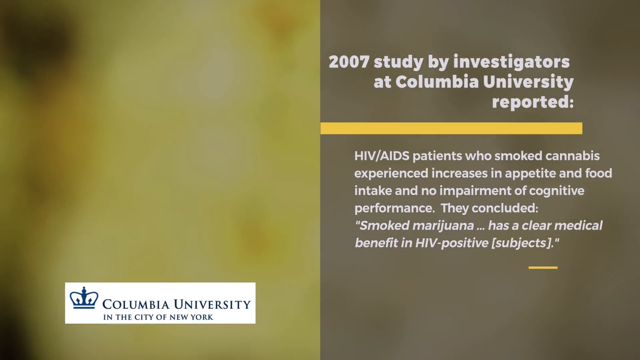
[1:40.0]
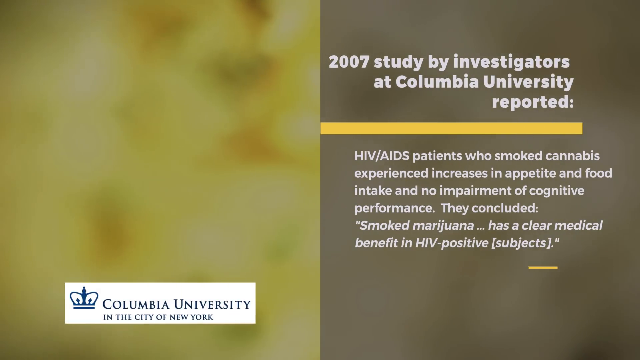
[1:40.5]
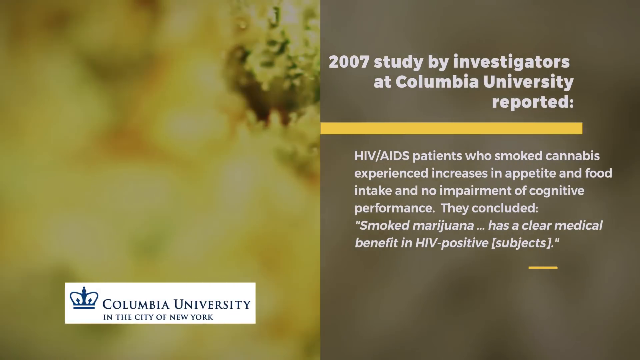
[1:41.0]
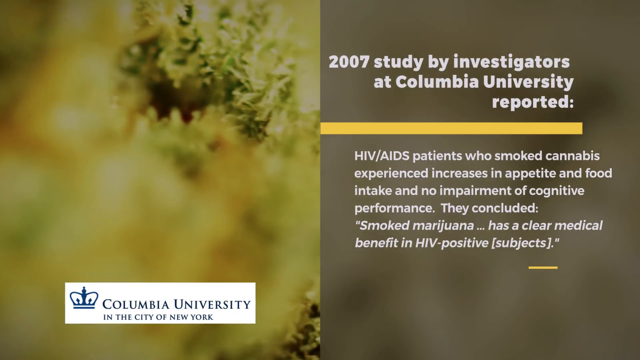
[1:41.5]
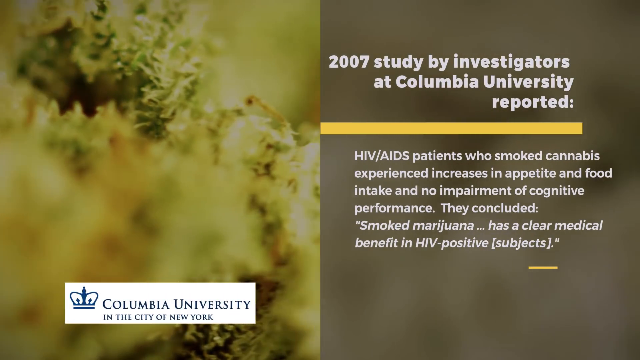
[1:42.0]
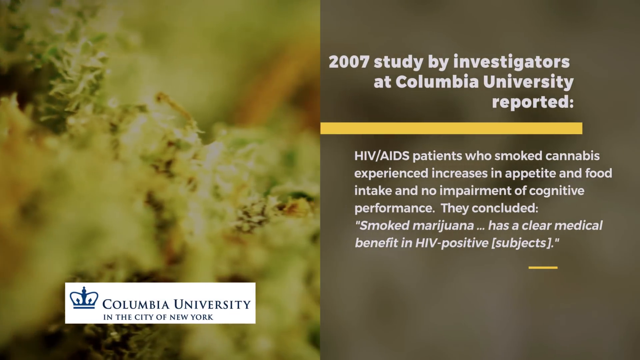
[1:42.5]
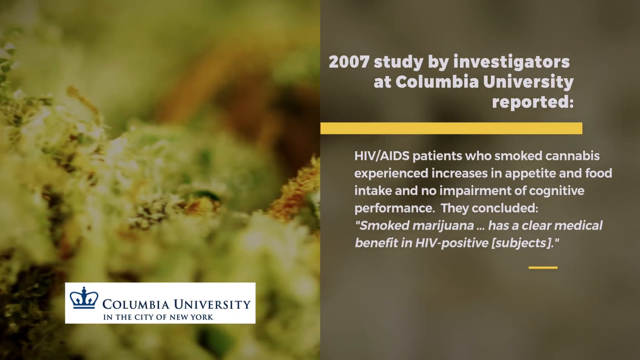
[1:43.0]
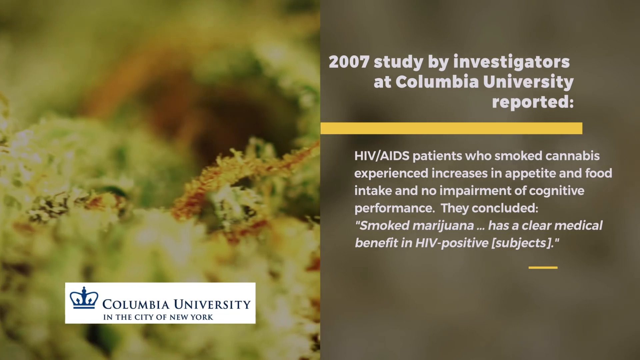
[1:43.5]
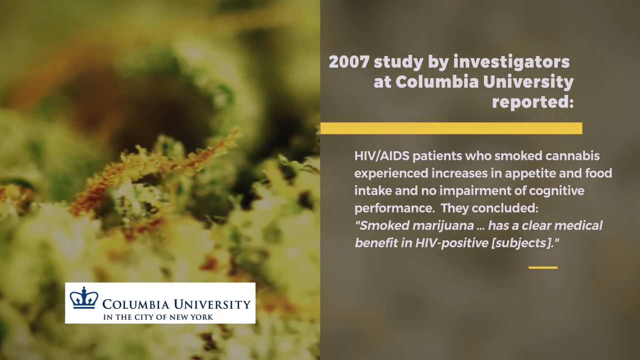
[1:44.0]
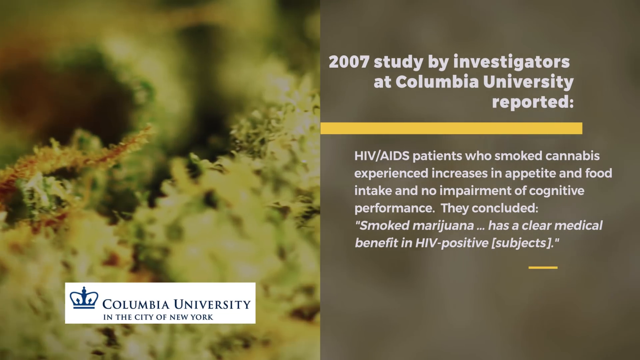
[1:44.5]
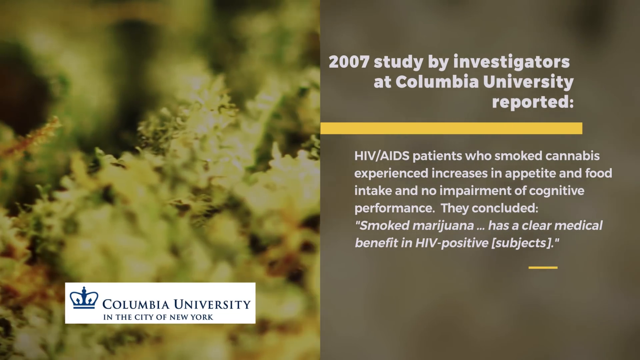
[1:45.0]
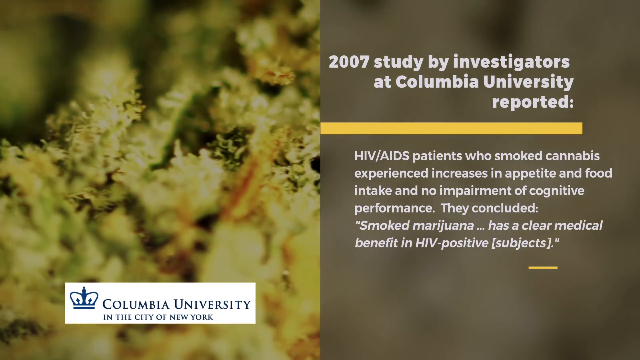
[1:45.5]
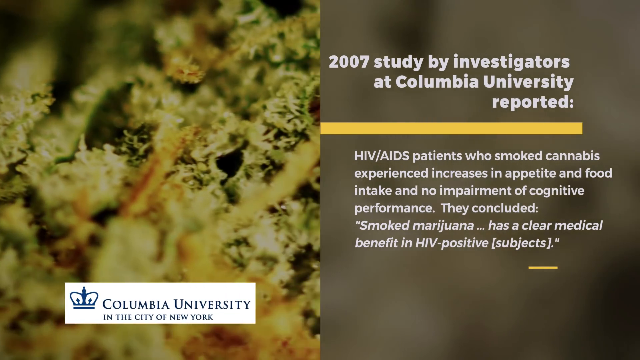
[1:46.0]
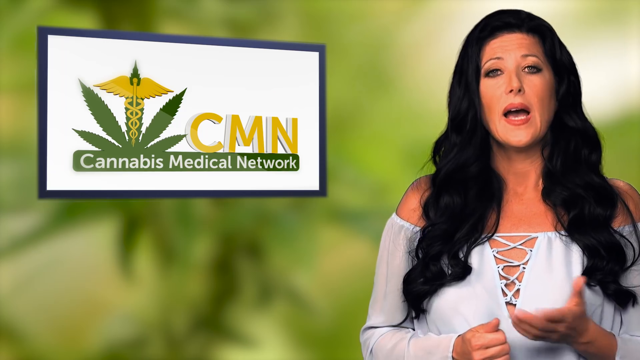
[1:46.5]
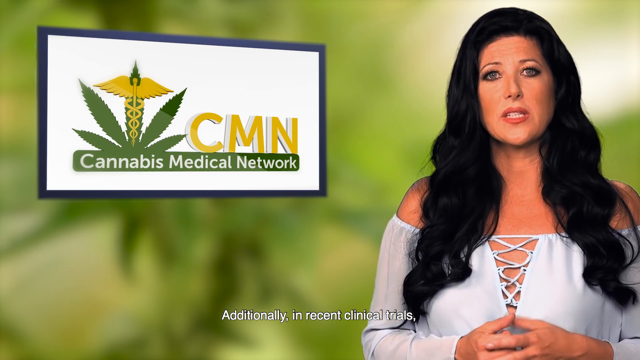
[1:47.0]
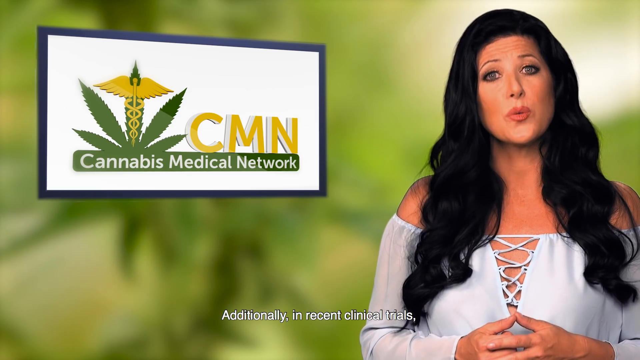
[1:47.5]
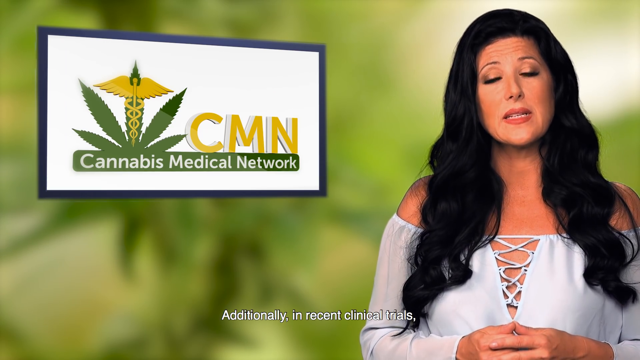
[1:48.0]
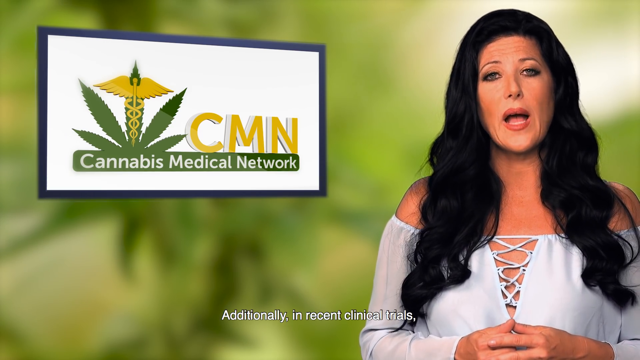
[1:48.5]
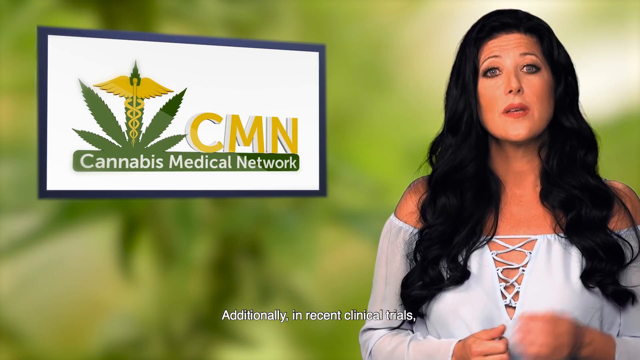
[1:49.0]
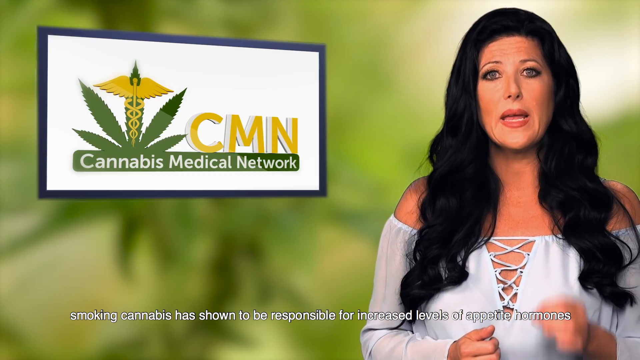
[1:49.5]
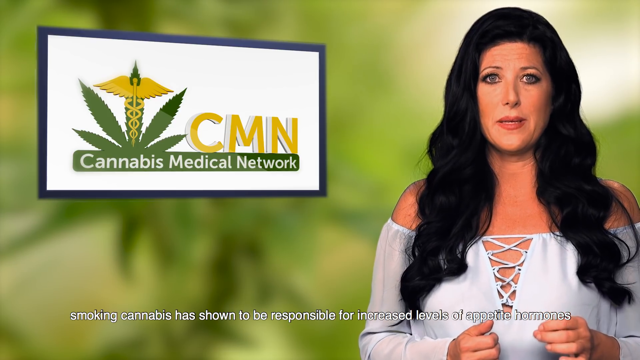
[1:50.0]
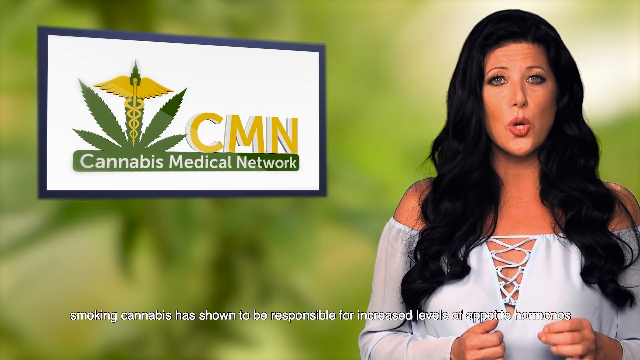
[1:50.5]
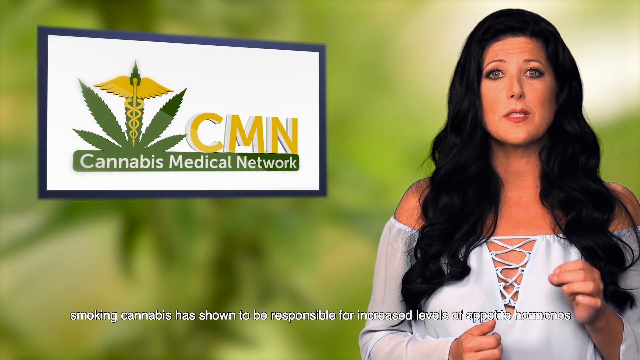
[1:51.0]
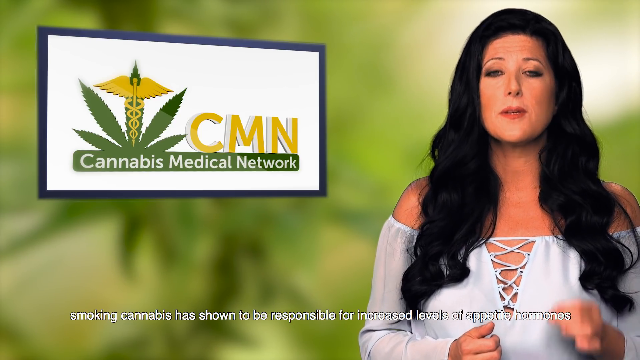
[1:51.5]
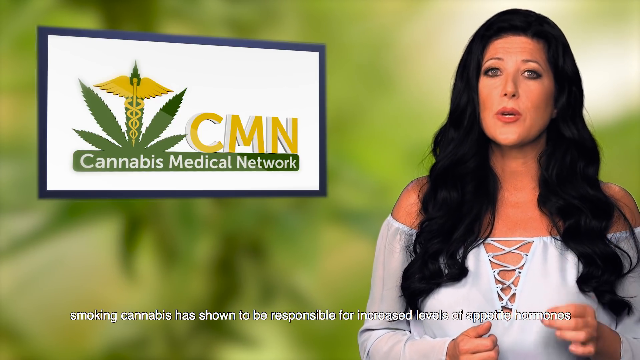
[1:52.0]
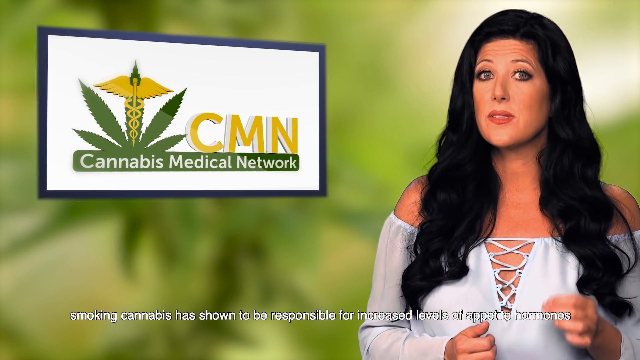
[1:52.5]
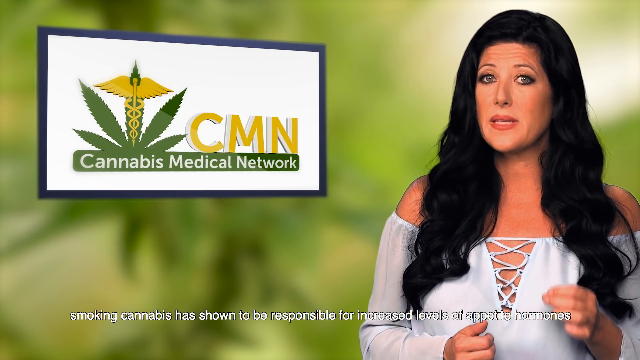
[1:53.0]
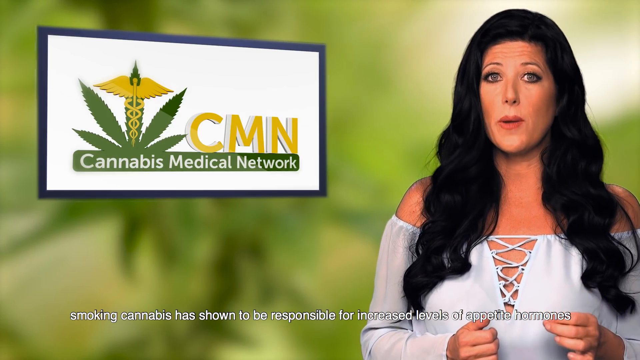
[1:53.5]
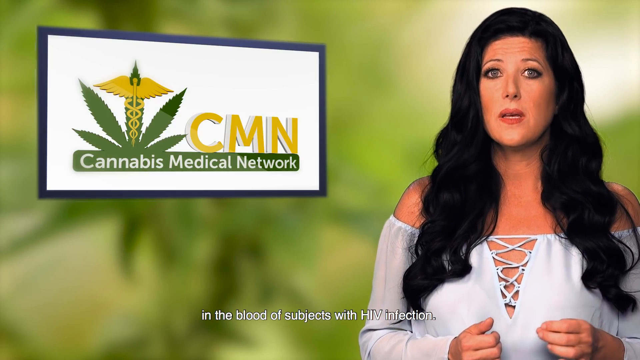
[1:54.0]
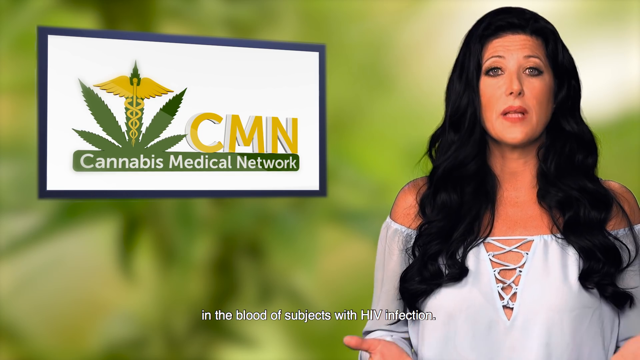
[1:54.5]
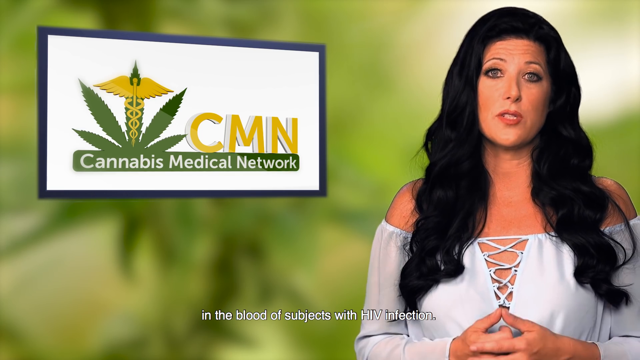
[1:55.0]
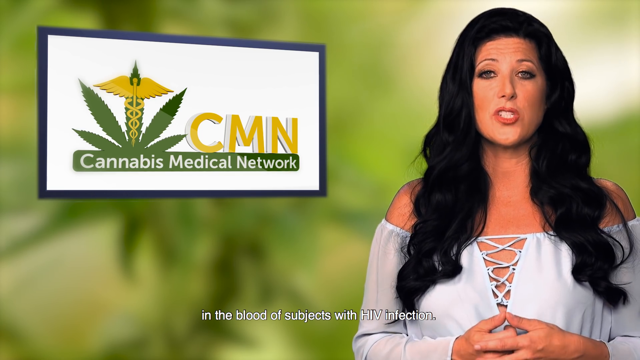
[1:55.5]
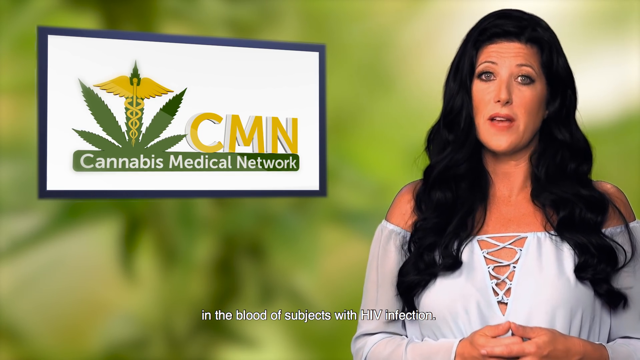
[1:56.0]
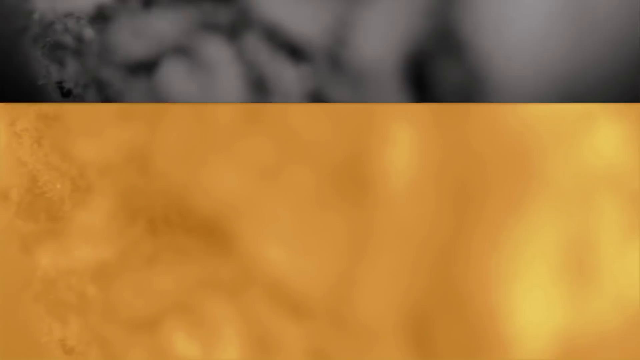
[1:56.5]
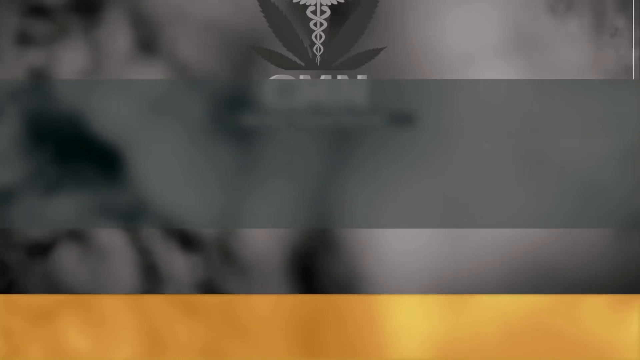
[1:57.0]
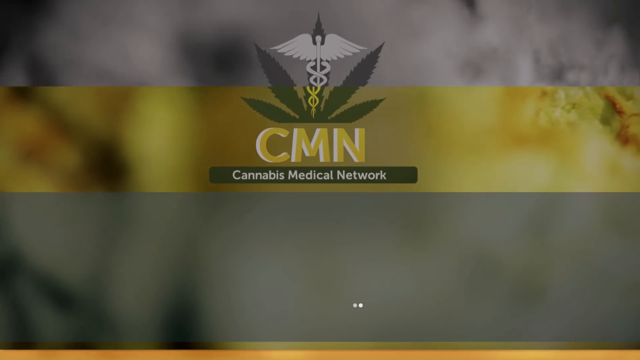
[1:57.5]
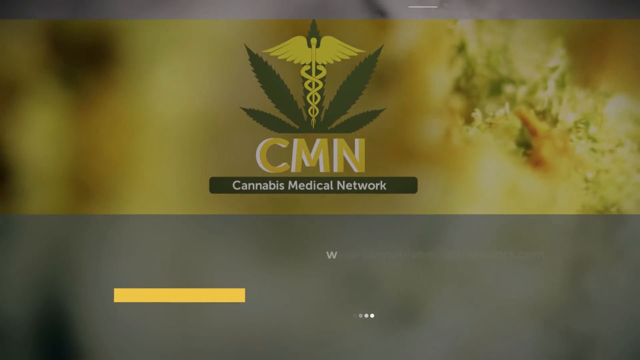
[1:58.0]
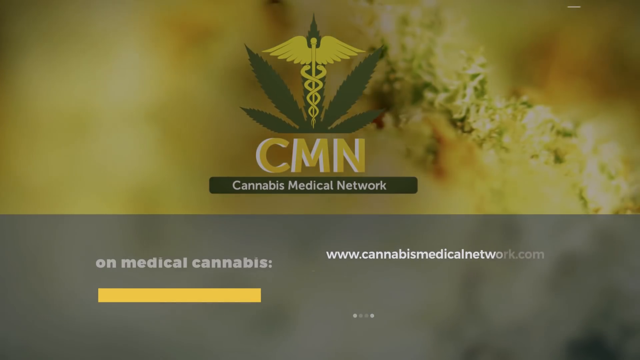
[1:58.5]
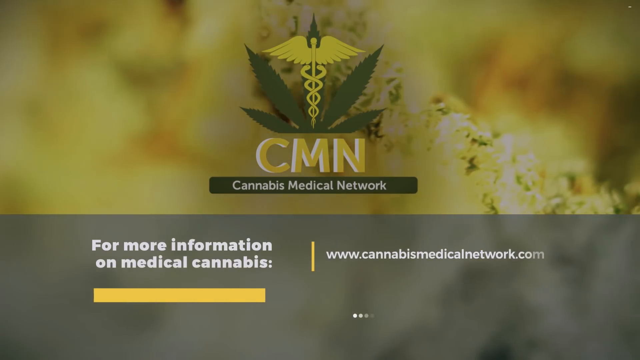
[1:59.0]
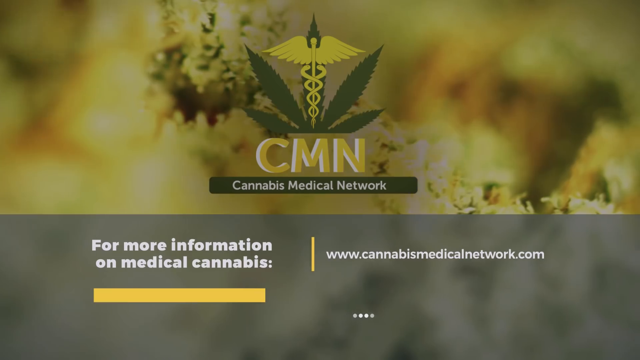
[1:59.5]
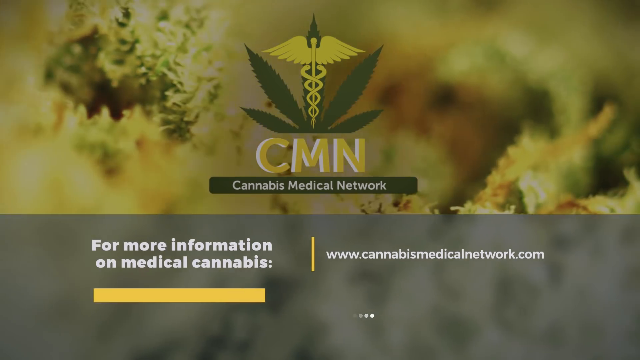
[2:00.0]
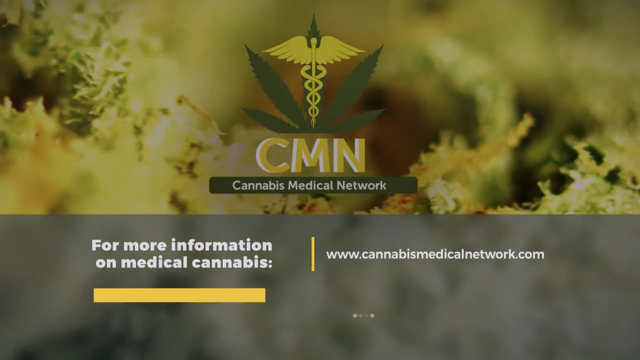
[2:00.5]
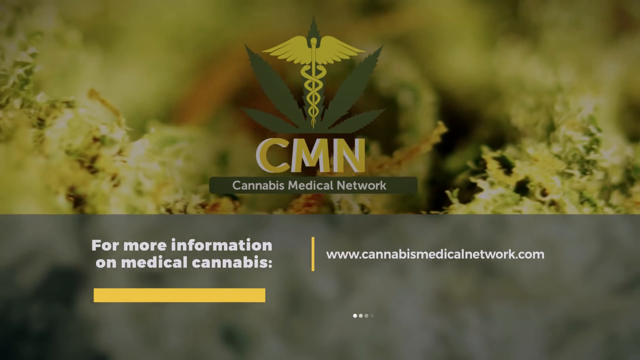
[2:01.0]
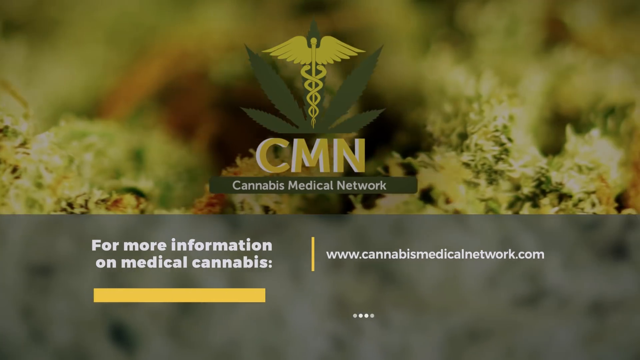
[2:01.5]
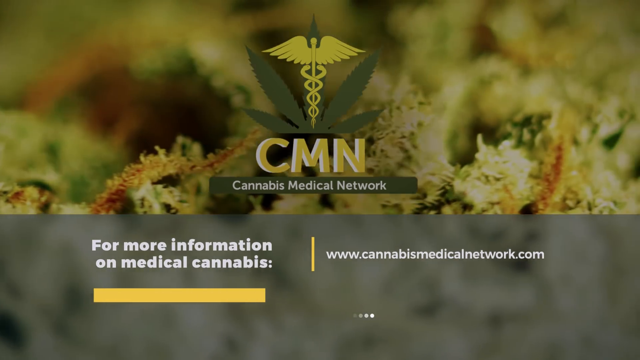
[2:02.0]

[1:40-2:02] The screen about the 2007 Columbia University study is showing, and then the video goes back to the woman, who says, "Additionally, in recent clinical trials, smoking cannabis has shown to be responsible for increased levels of appetite hormones in the blood of subjects with HIV infection." The outro shows the CMN logo with "Cannabis Medical Network," and at the bottom the text reads "for more information on medical cannabis, go to www.cannabismedicalnetwork.com."